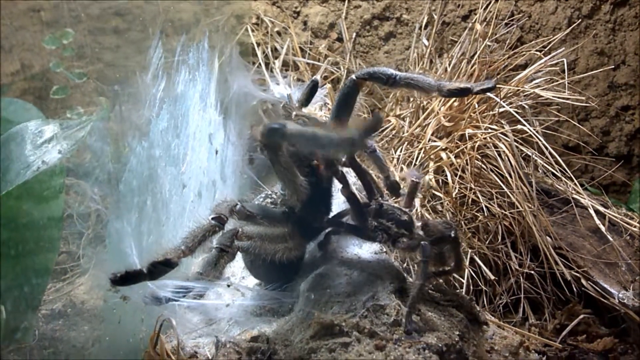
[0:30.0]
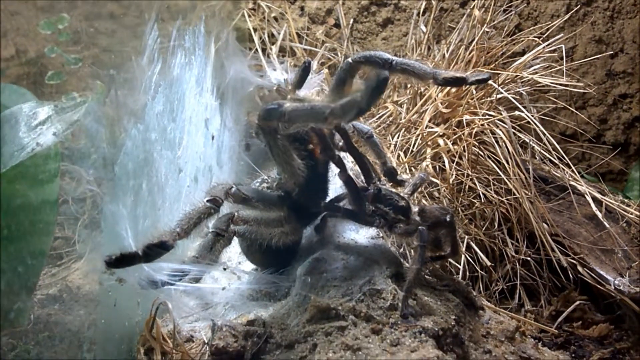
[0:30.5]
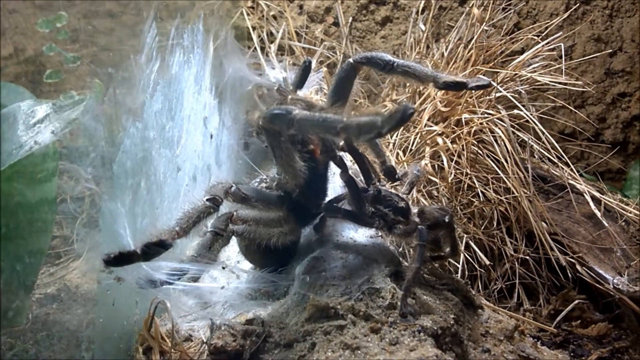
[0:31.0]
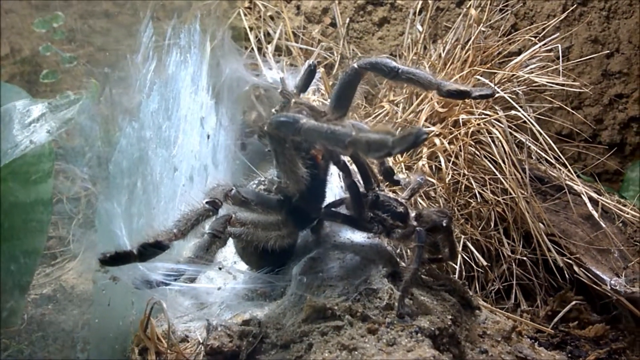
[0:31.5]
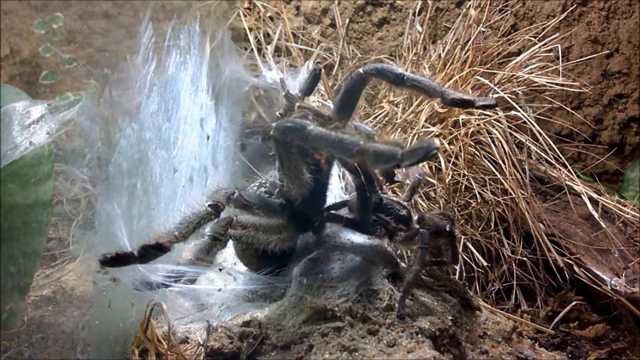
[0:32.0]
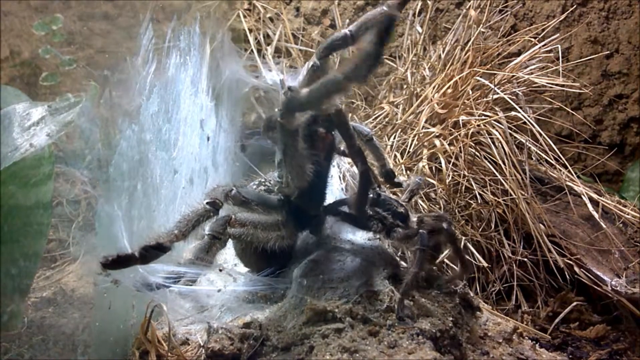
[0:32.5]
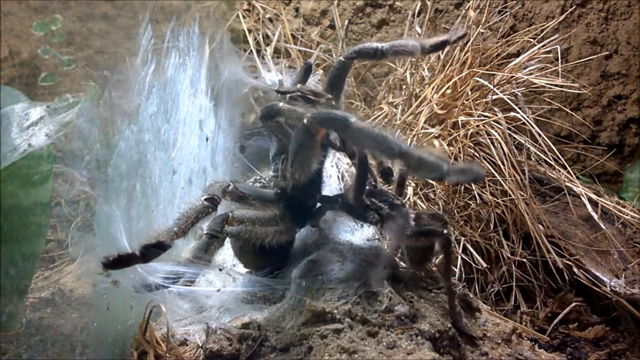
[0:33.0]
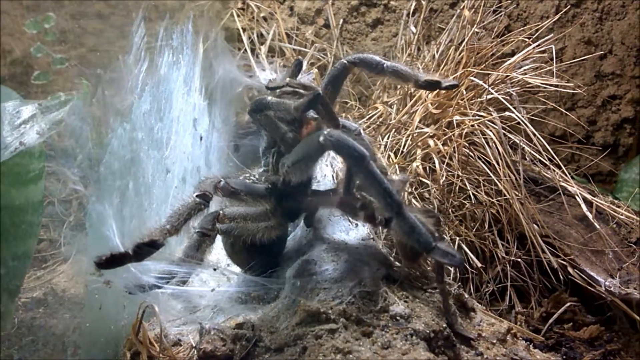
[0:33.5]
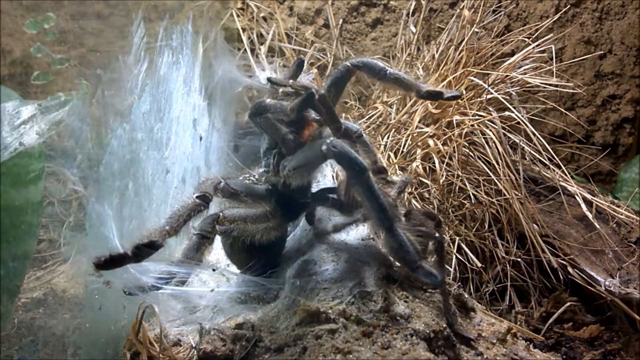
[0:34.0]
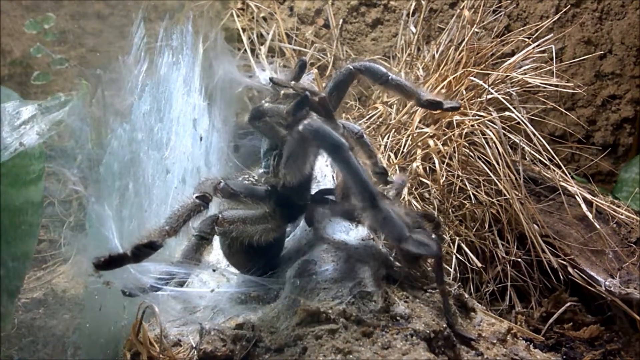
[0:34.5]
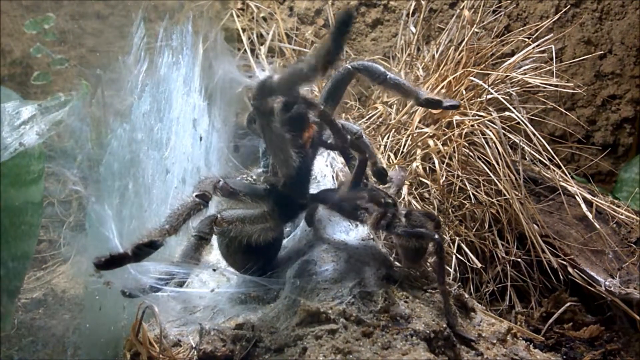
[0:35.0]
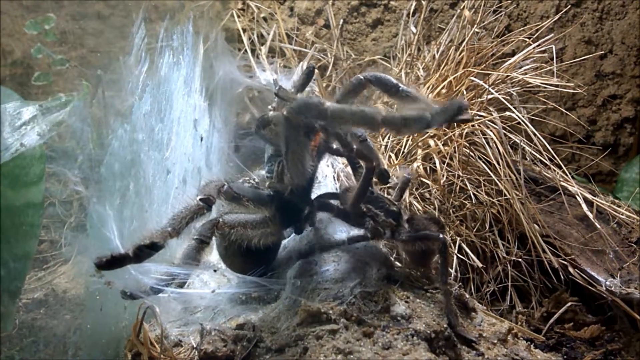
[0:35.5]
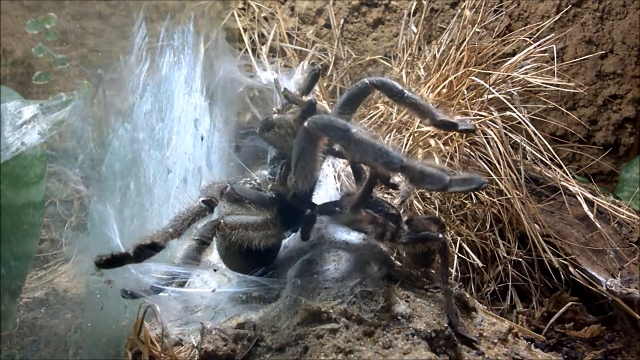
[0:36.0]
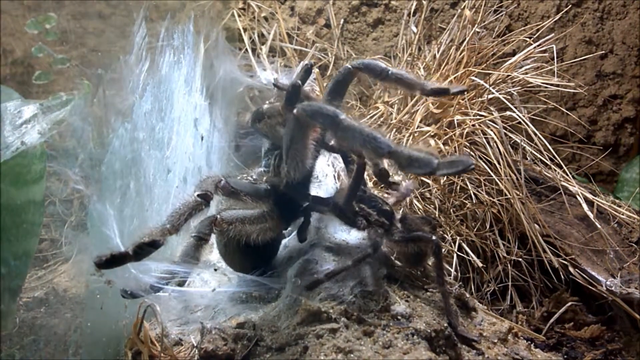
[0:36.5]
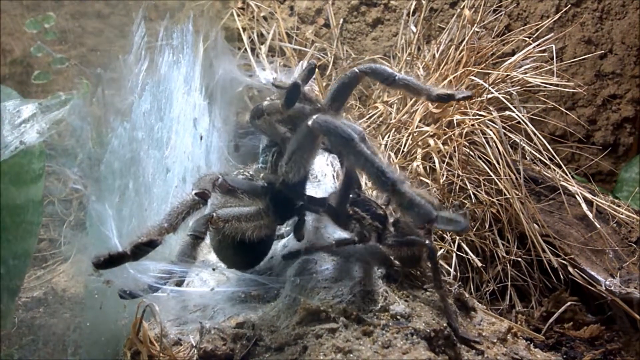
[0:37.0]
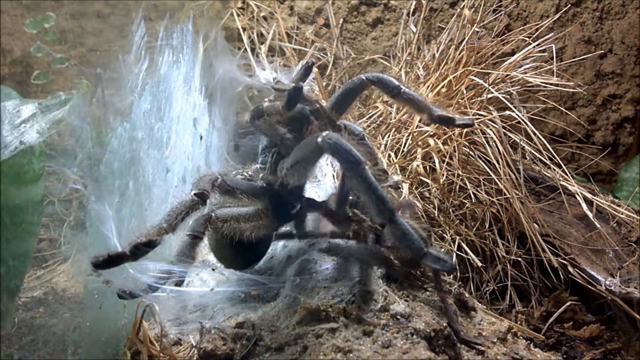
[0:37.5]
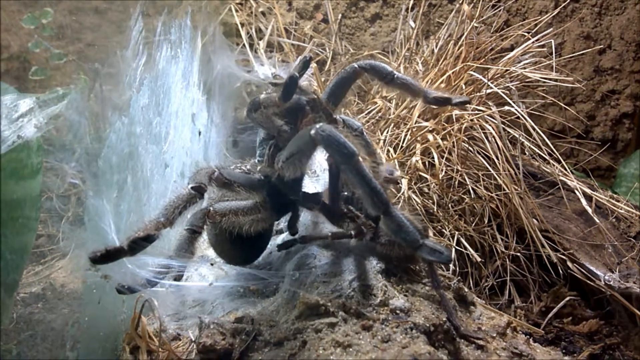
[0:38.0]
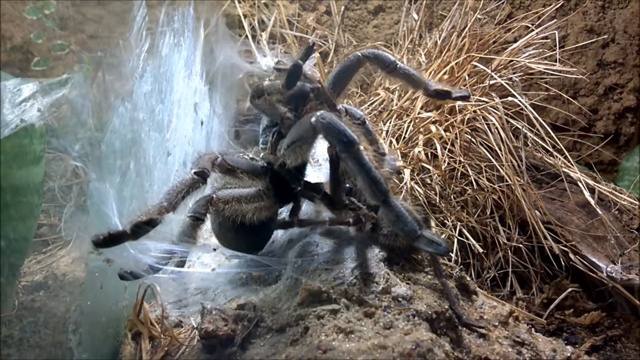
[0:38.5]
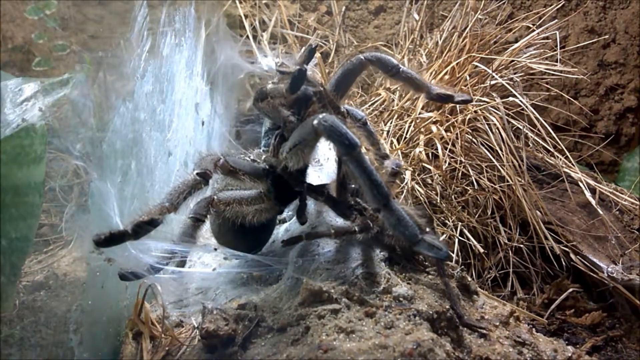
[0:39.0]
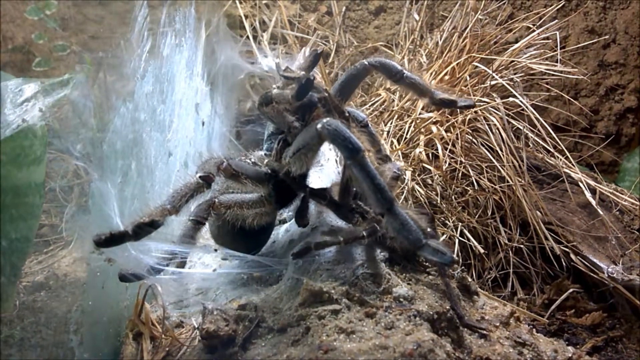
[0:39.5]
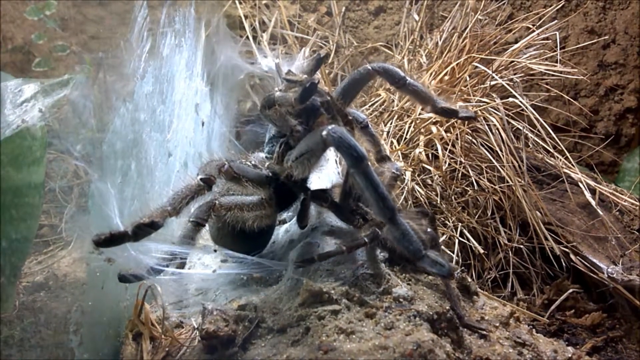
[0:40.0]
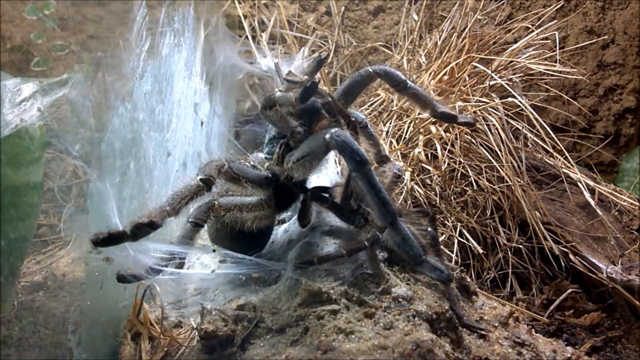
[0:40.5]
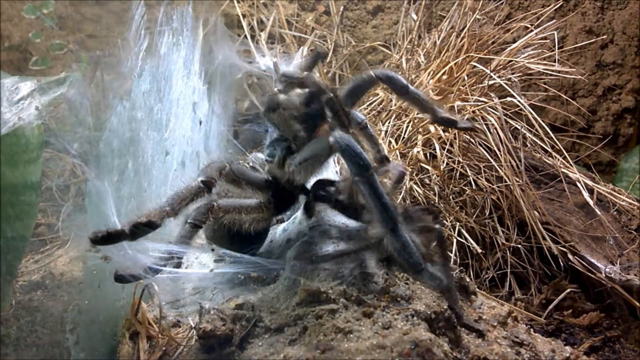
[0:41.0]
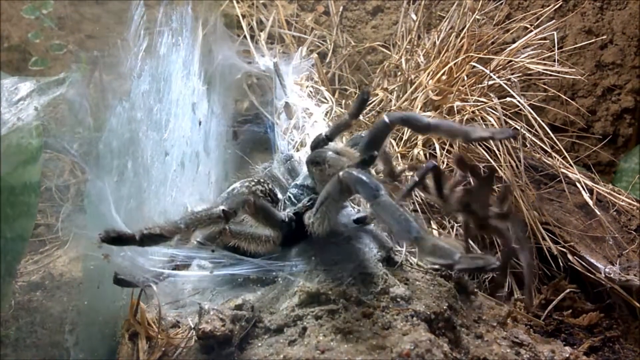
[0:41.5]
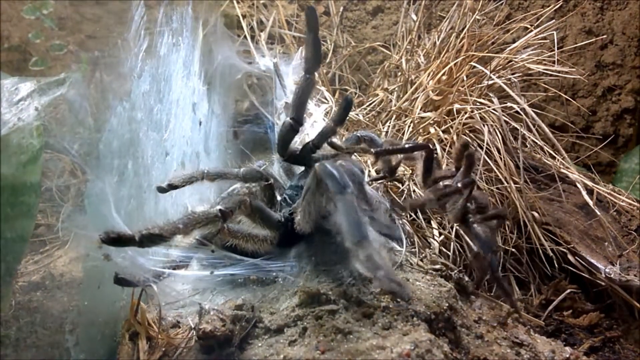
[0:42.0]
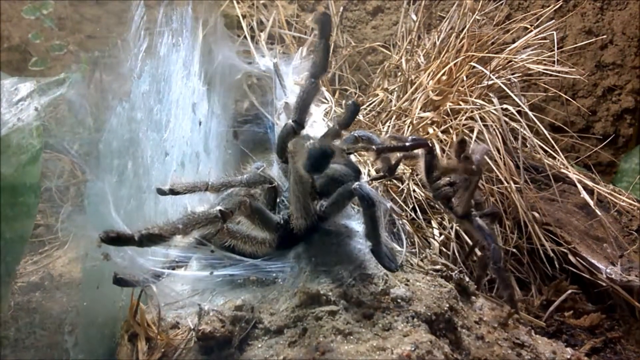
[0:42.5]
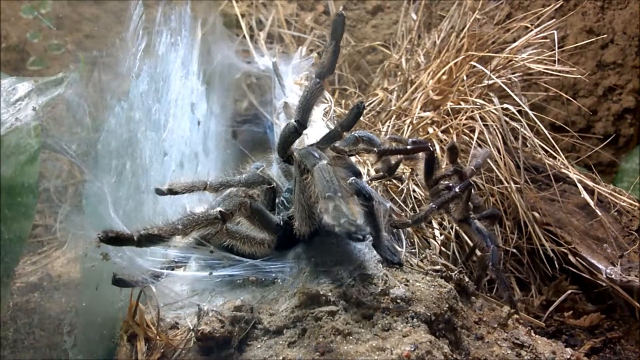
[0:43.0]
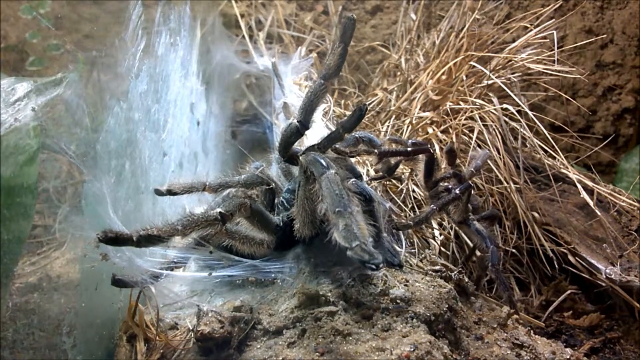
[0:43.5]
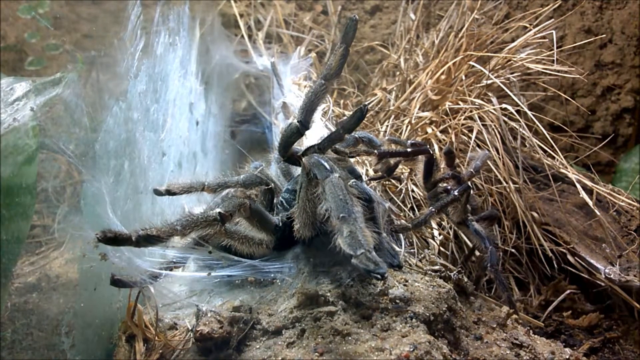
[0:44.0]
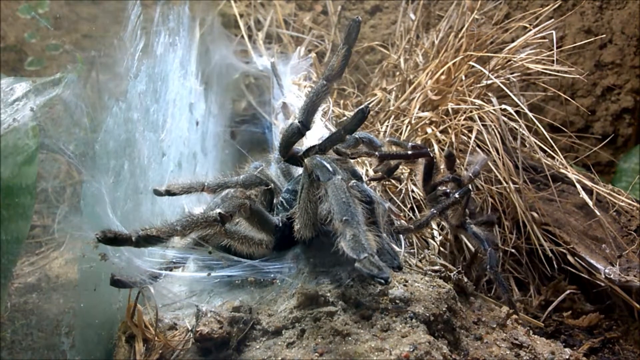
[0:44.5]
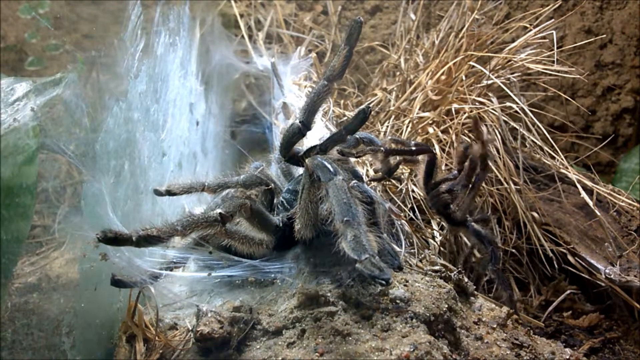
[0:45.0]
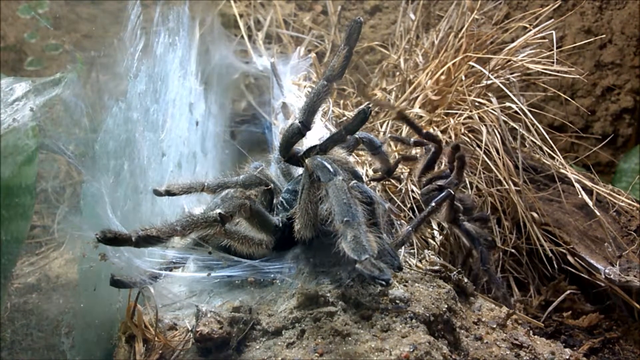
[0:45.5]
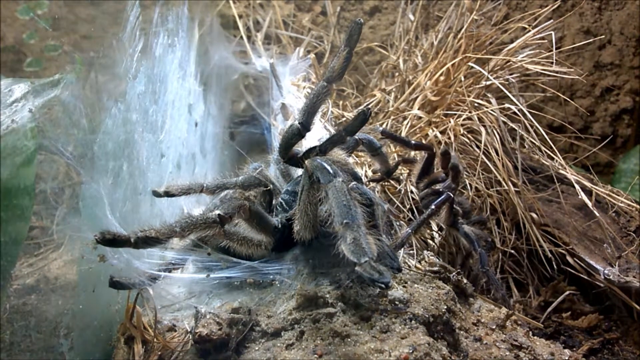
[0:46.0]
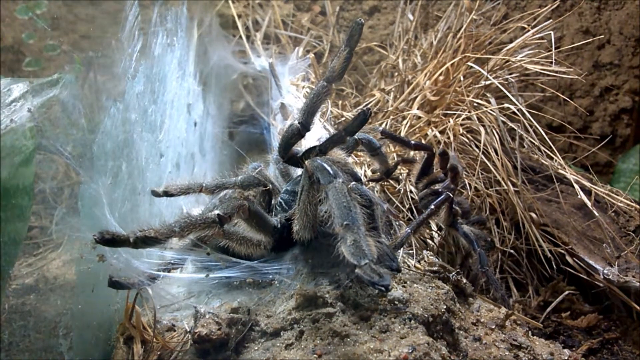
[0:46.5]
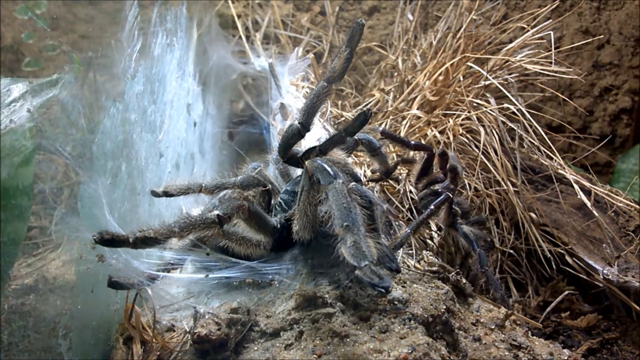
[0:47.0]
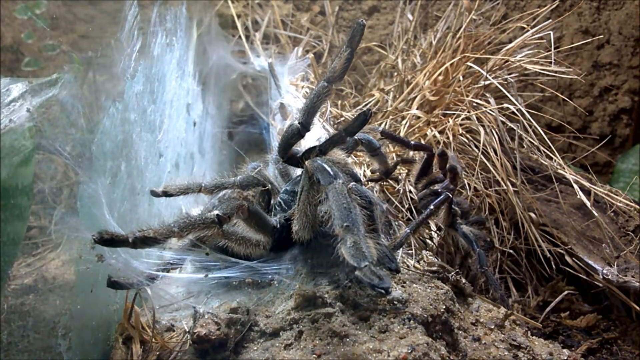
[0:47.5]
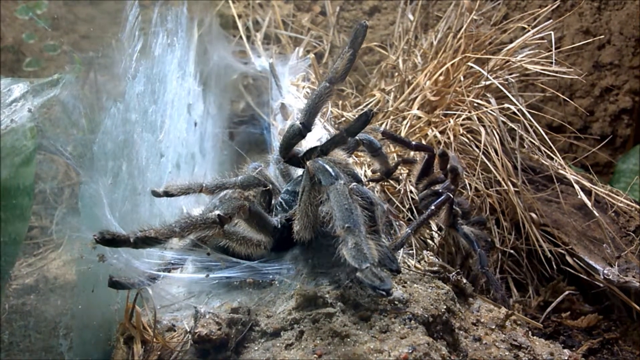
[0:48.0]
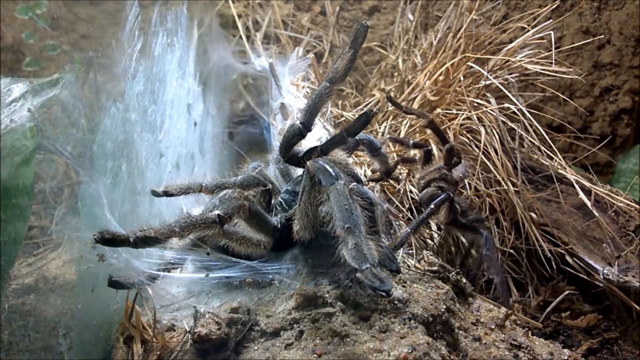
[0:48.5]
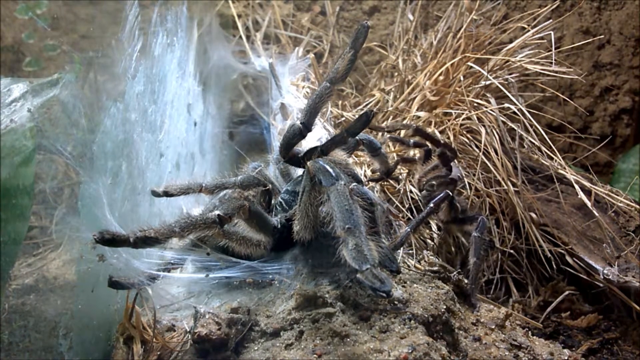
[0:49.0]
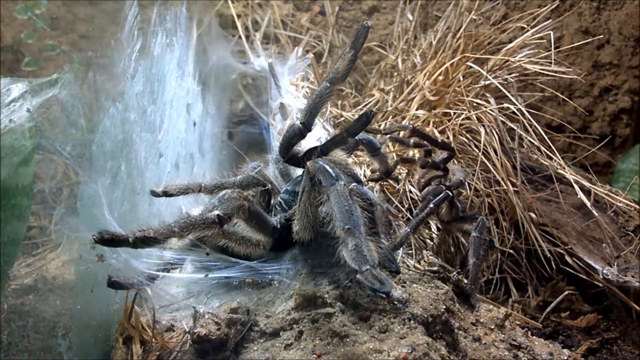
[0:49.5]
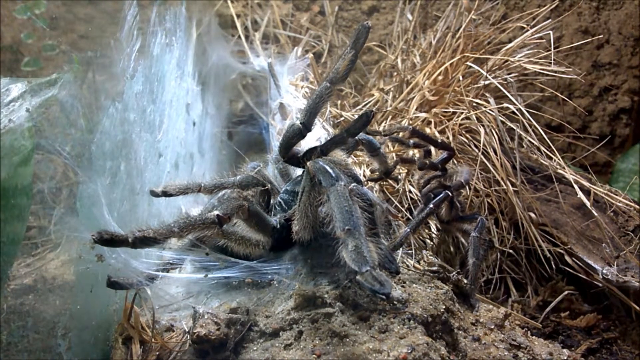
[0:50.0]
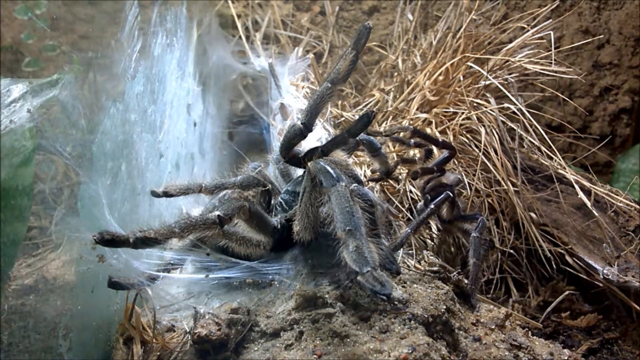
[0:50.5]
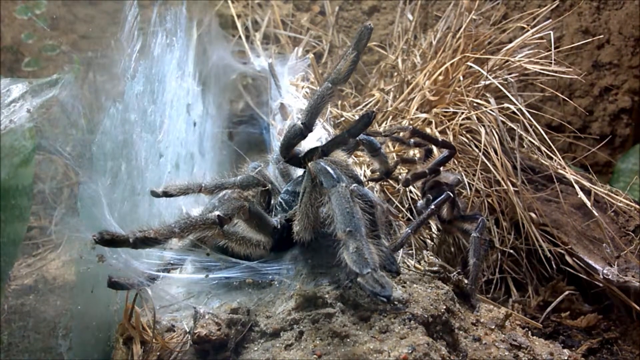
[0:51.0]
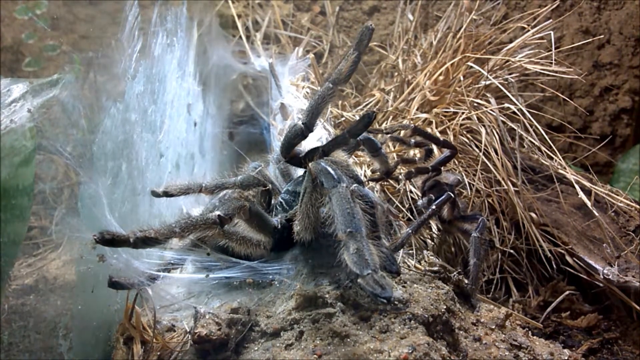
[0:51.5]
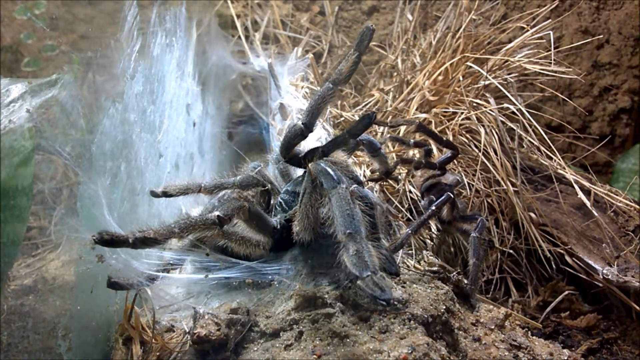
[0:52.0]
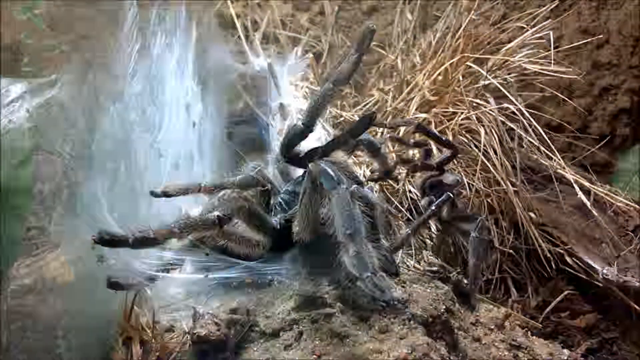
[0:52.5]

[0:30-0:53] What seem to be two tarantulas are fighting in a terrarium. The larger tarantula, on the left side, looks to be pushing itself on top of a smaller tarantula, which has its front legs up and is pushing the larger one back. The larger tarantula, seemingly much bigger and stronger, appears to overpower it, eventually pushing the smaller tarantula back and dropping down on its stomach. Both tarantulas then kind of sit there with their two front legs up in the air, as if taking a break, neither moving much; the larger tarantula seems to have won. The smaller tarantula kind of sinks backwards and moves its front feet around, while the larger tarantula stays fixed in one place.